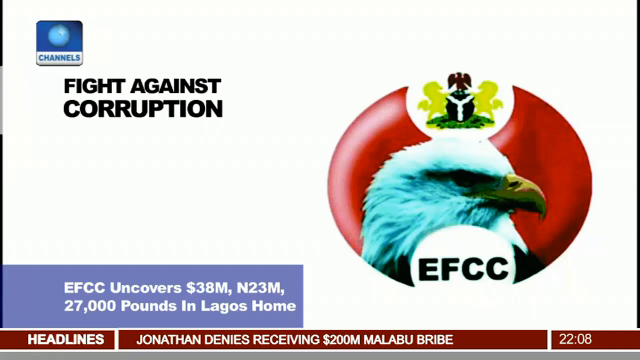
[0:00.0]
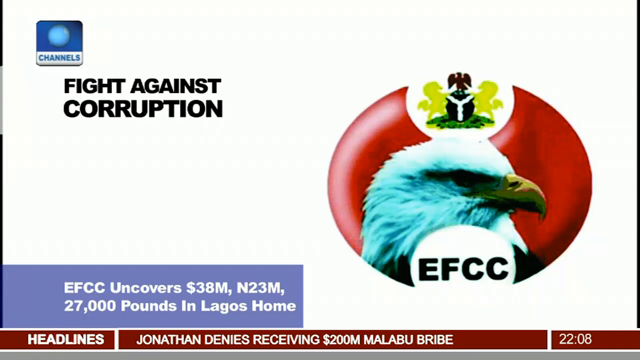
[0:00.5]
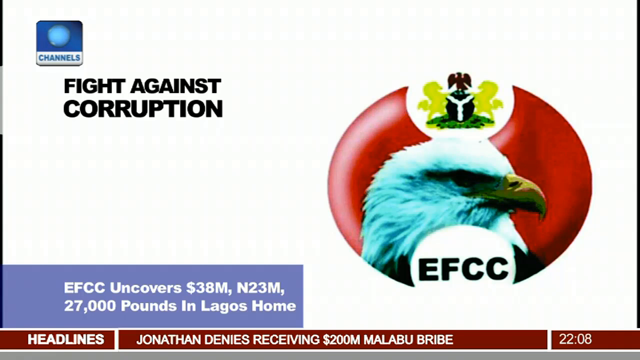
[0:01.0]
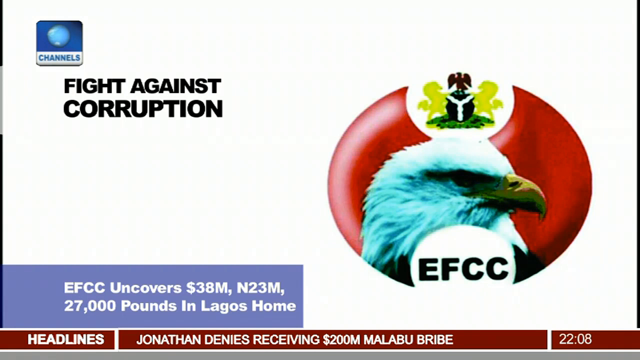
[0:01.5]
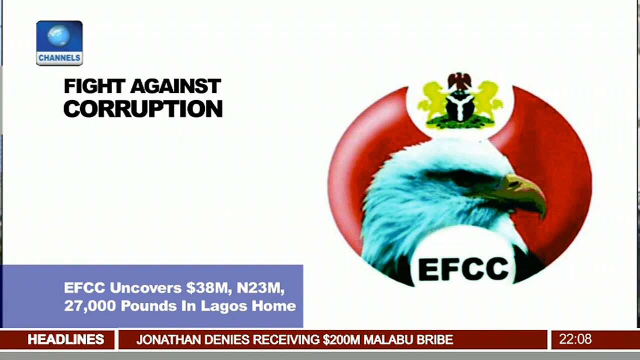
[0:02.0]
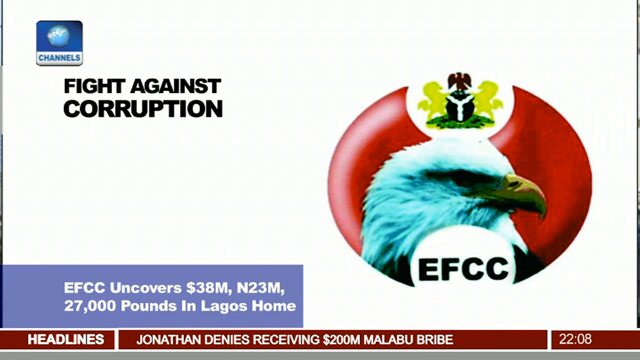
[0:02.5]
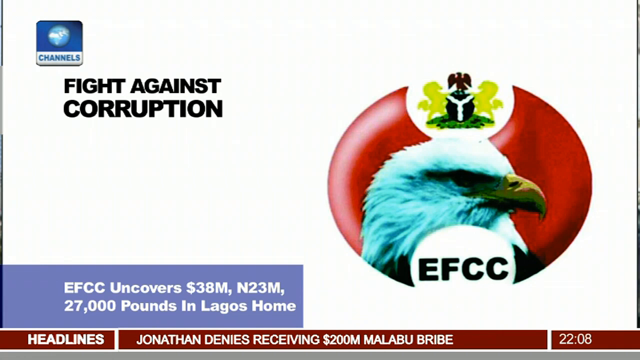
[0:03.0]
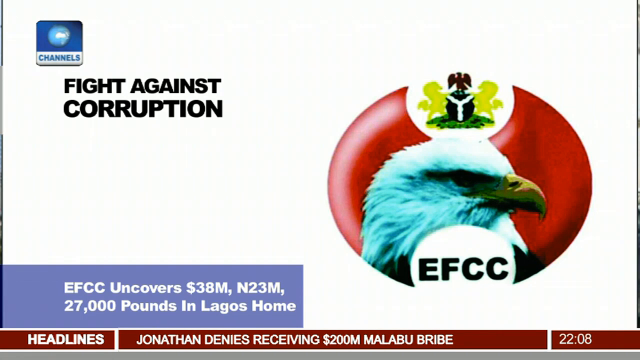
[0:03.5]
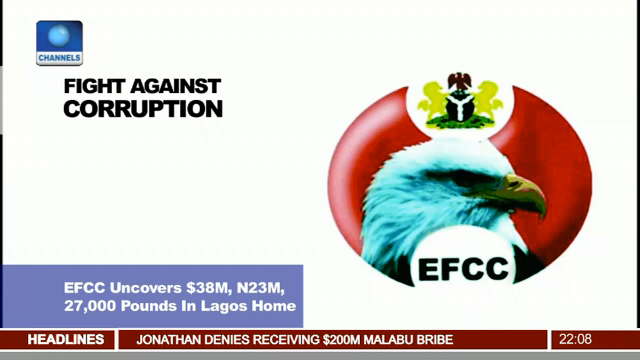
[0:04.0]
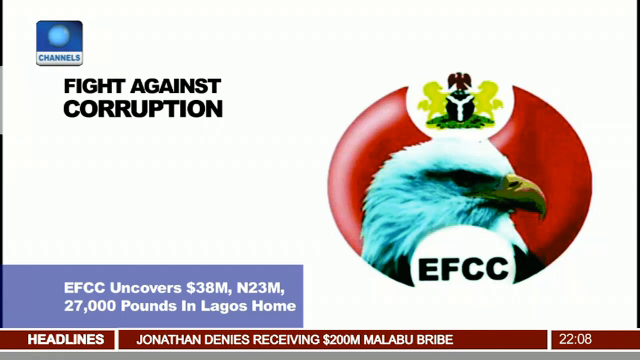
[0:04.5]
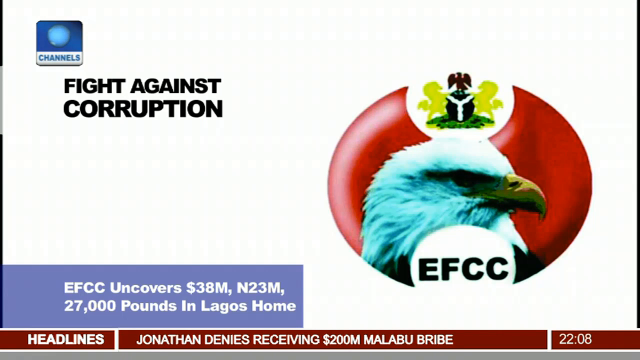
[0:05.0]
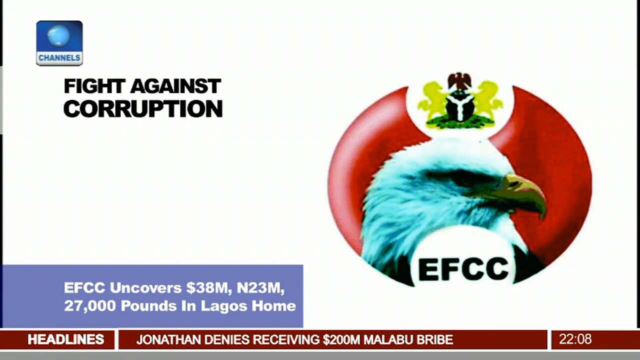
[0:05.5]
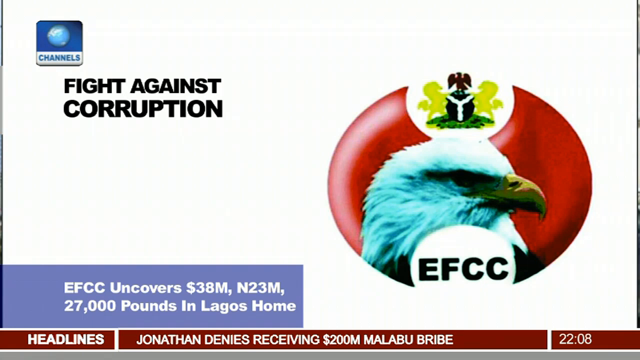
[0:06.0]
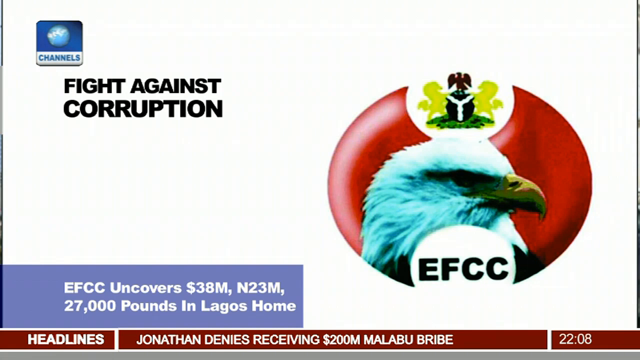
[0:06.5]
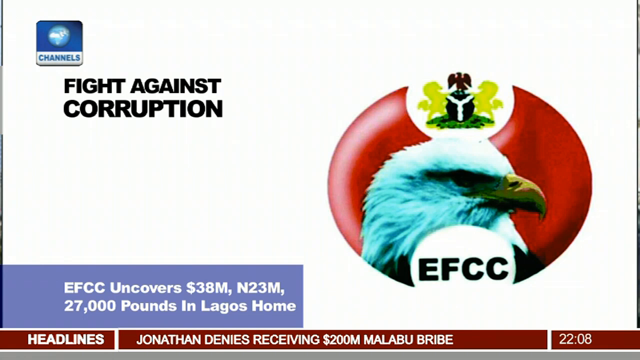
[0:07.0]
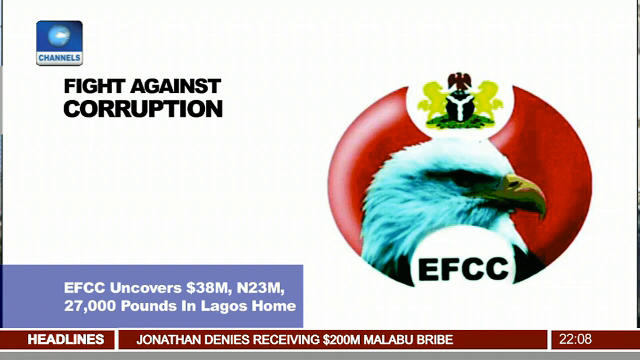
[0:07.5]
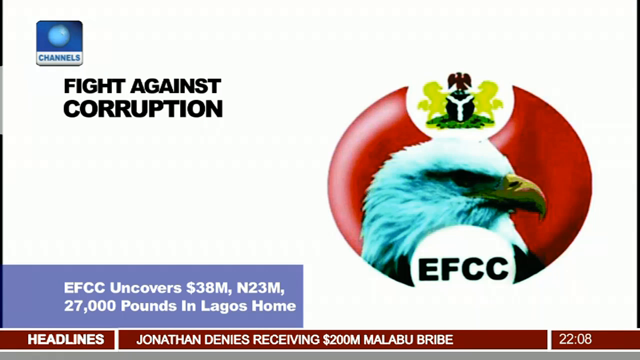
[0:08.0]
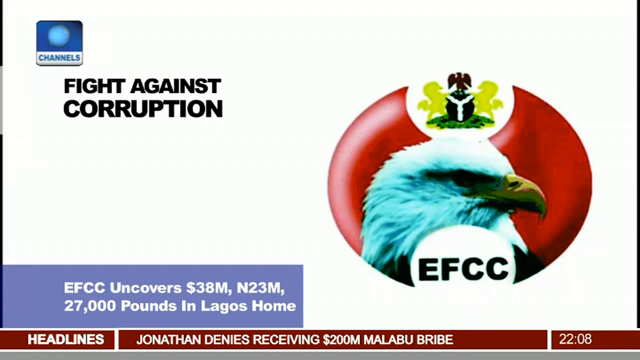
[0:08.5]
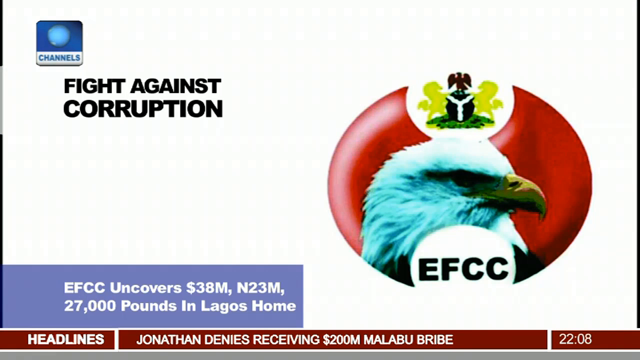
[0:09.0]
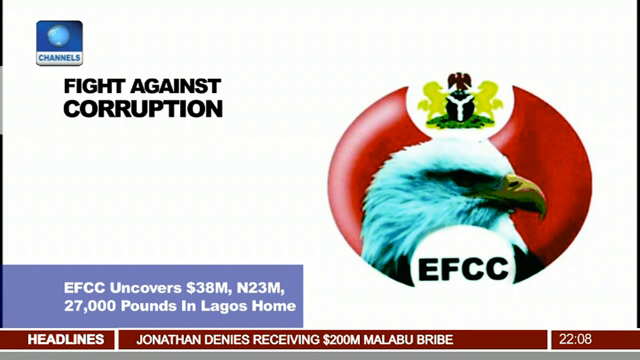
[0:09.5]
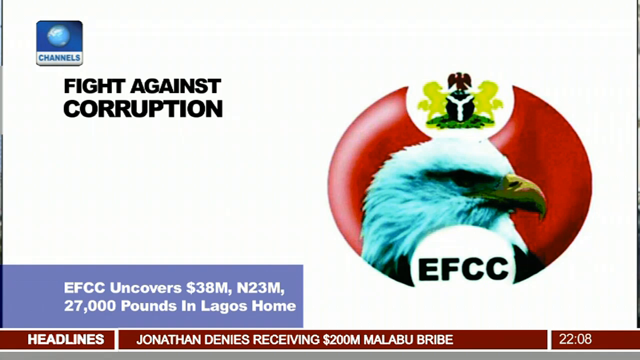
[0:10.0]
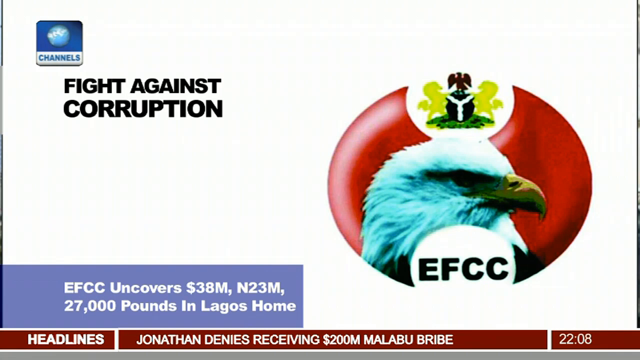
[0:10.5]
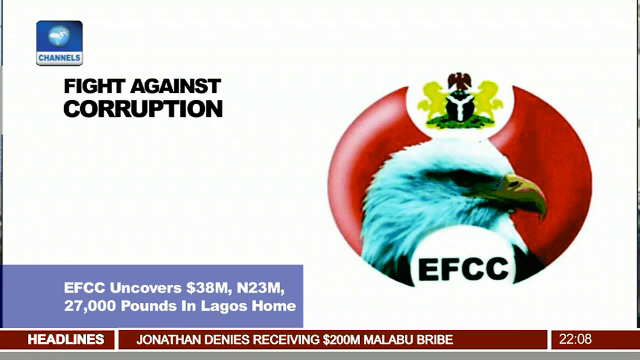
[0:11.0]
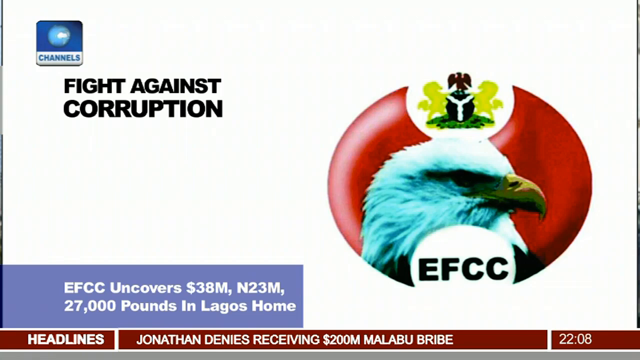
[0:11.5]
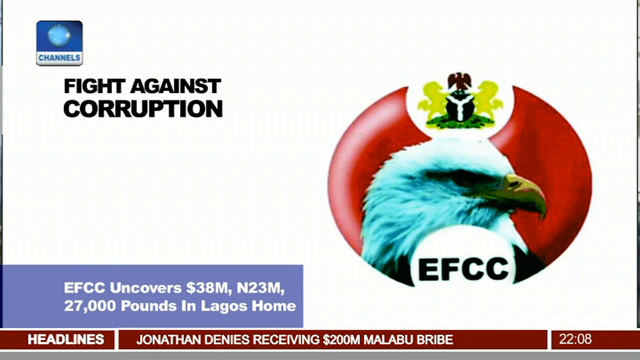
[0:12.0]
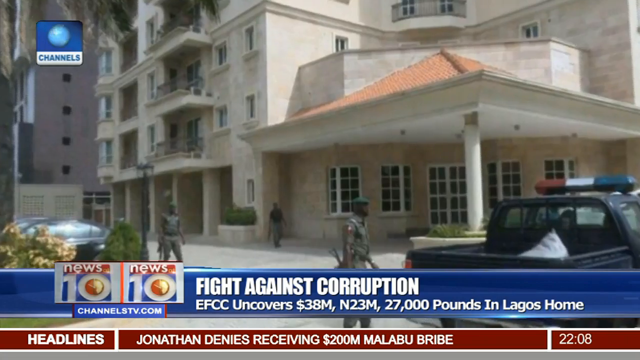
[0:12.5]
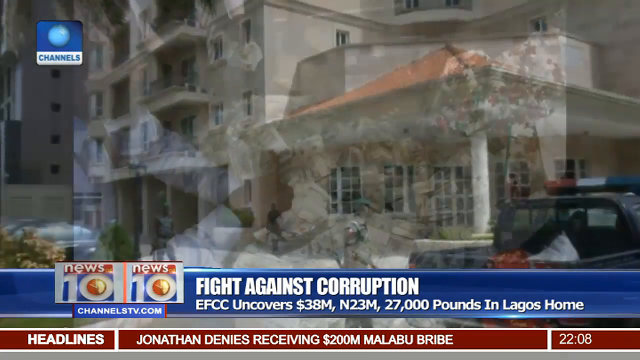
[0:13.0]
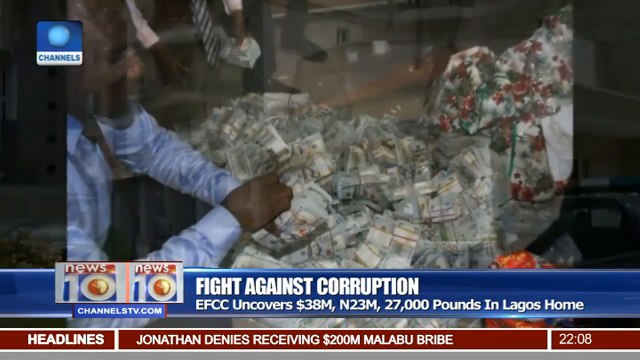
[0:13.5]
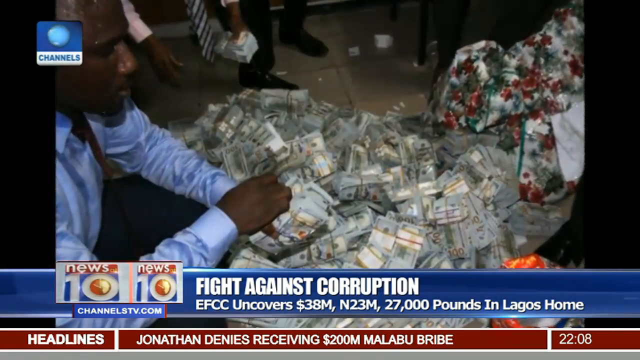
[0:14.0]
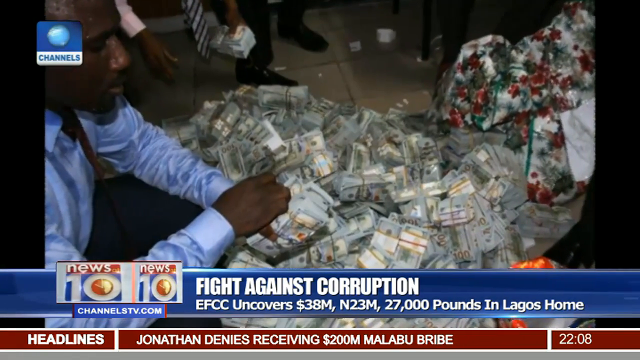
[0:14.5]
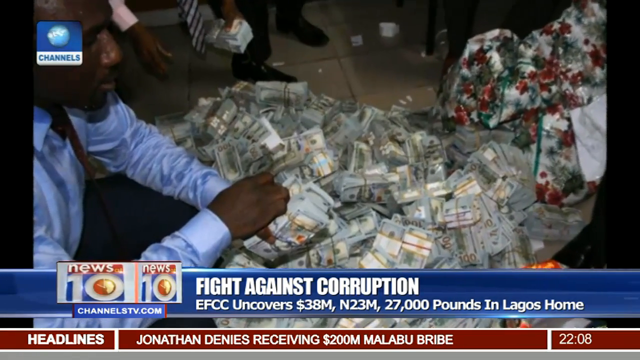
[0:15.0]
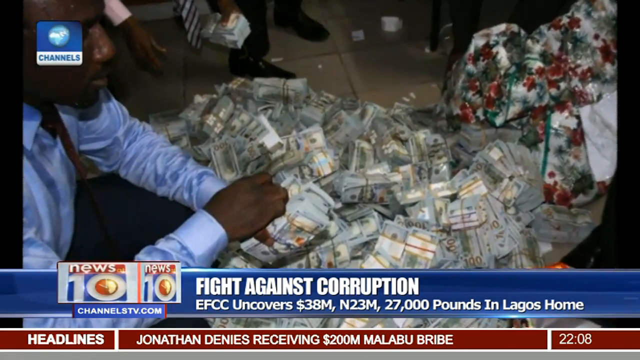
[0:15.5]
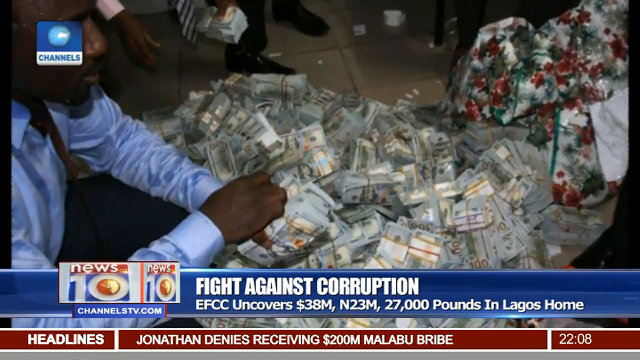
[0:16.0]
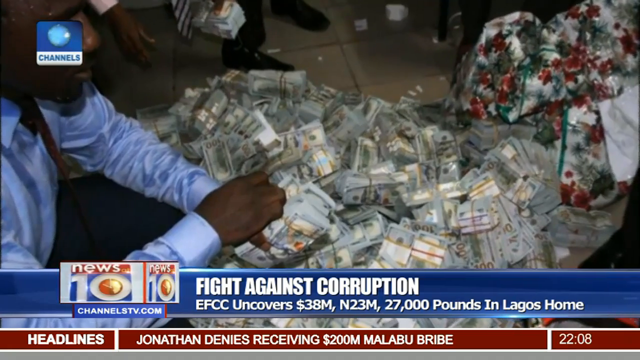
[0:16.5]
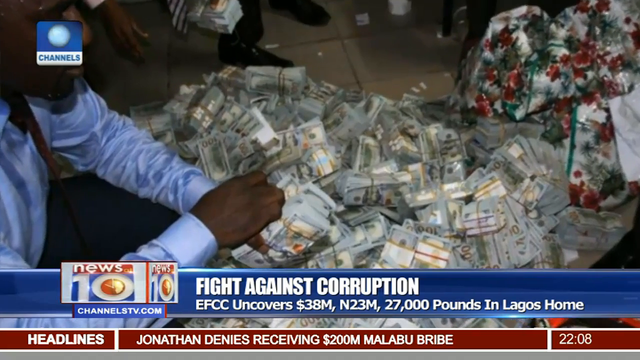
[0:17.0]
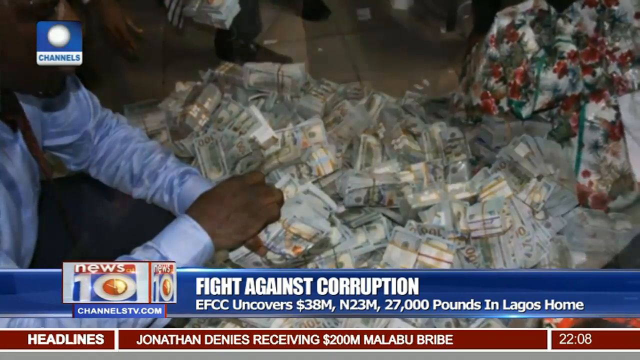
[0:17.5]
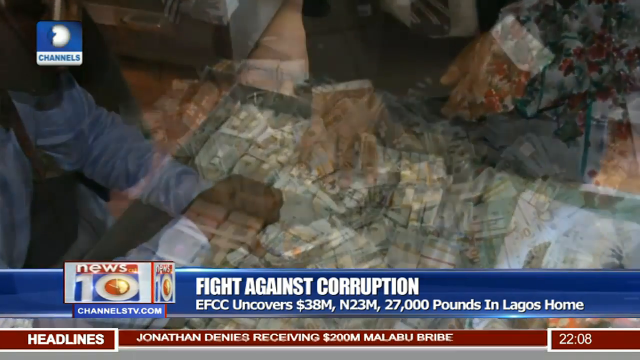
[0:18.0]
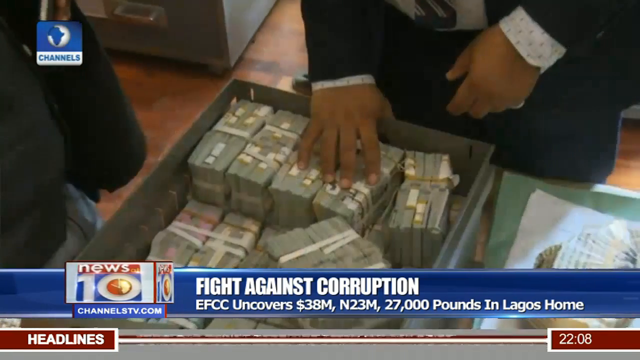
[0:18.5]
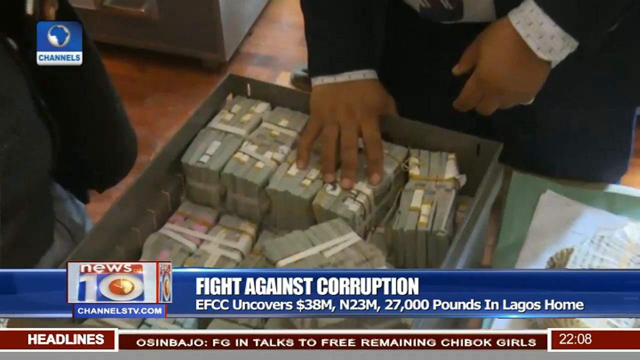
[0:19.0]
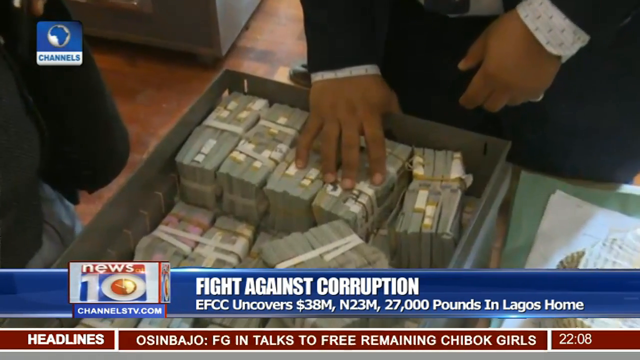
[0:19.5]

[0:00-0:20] A news station graphic appears on a white background. In the upper left-hand corner it says "channels," and then in black font it says "fight against corruption." At the bottom there is a purple box with a caption reading "fight against corruption. EFCC uncovers 38 million N23M, 27,000 pounds in Lagos home." A headlines box says "Jonathan denies receiving 200 million Malibu bribe." On the right is a picture of an eagle looking towards the right, with red all around it and "EFCC" written below its head. Someone's hand is on a box of money in that section.